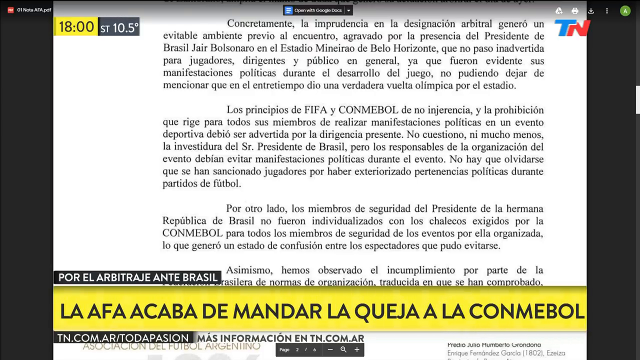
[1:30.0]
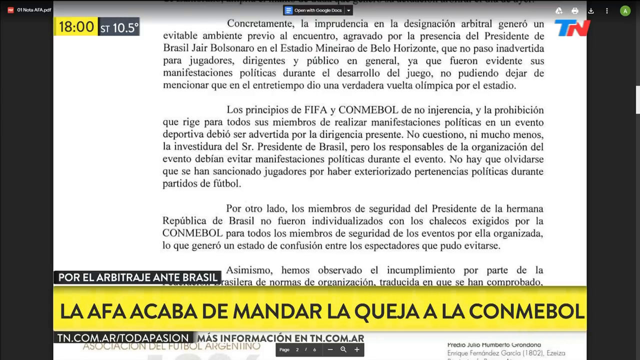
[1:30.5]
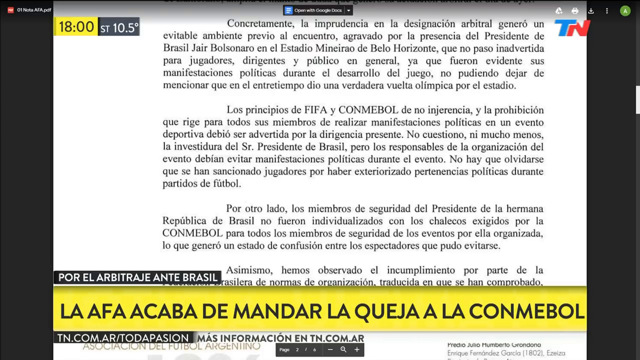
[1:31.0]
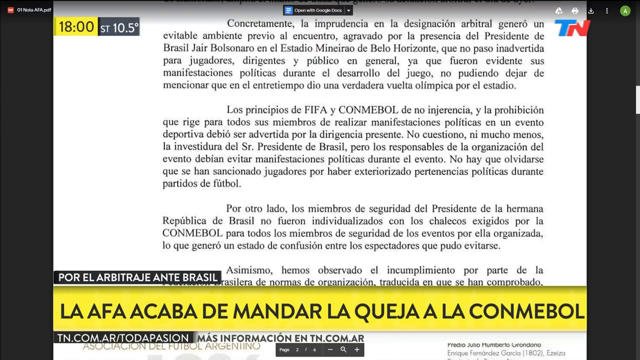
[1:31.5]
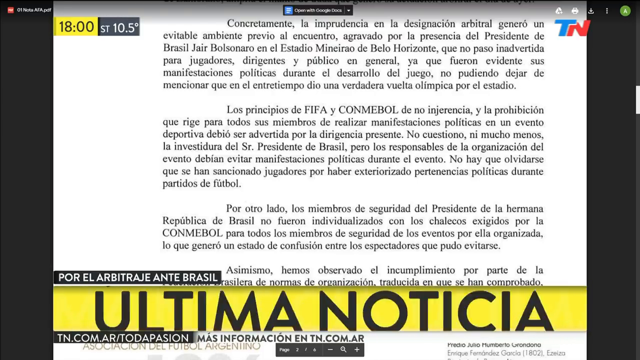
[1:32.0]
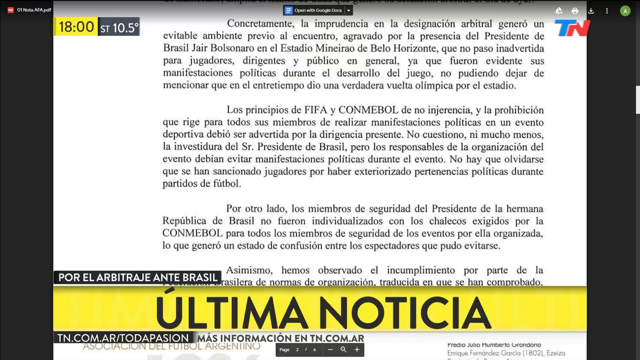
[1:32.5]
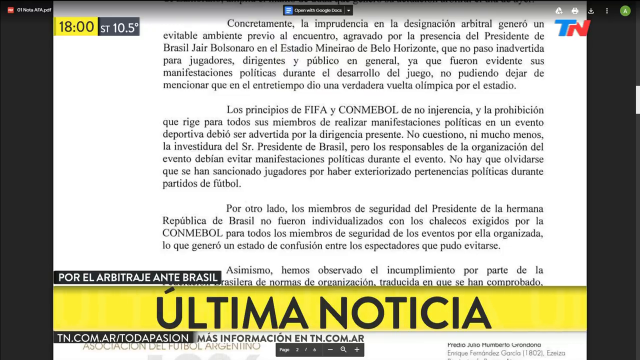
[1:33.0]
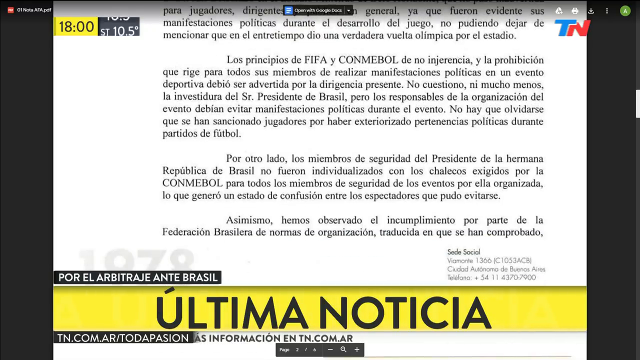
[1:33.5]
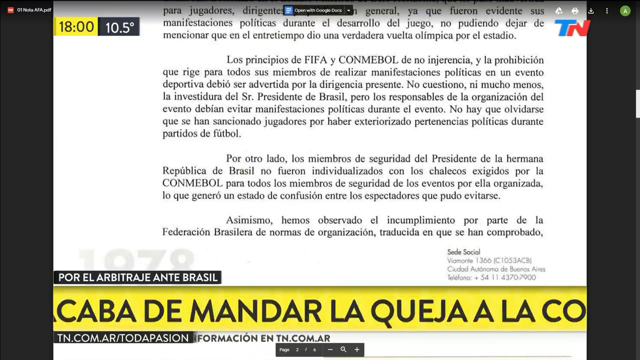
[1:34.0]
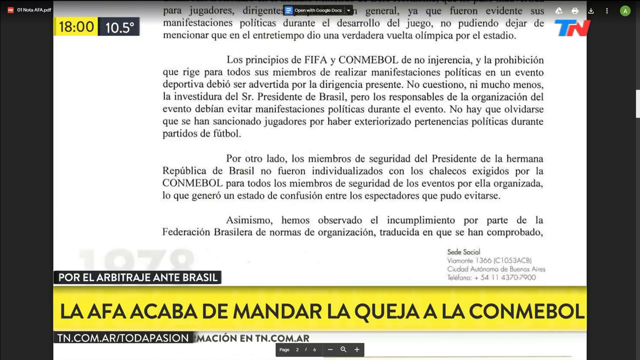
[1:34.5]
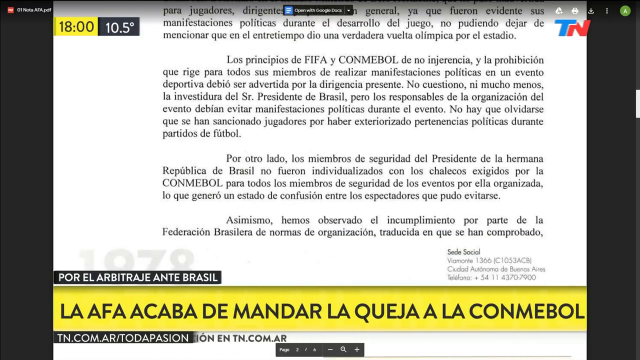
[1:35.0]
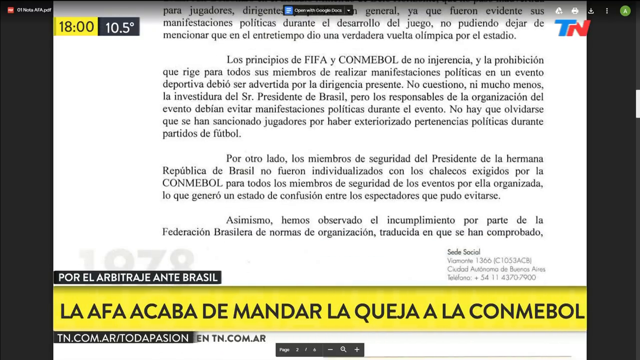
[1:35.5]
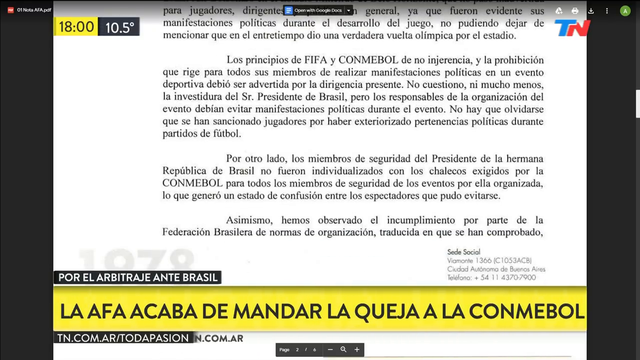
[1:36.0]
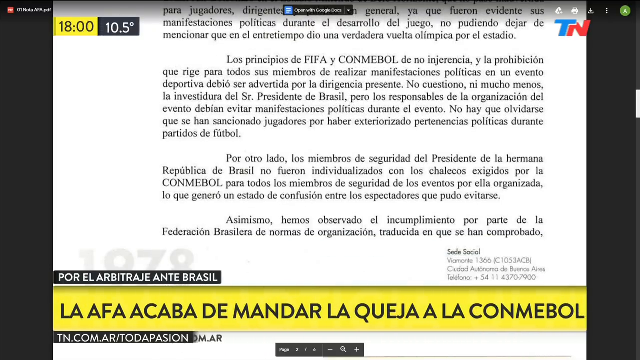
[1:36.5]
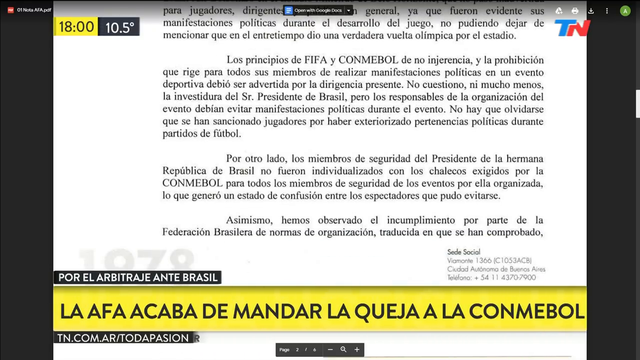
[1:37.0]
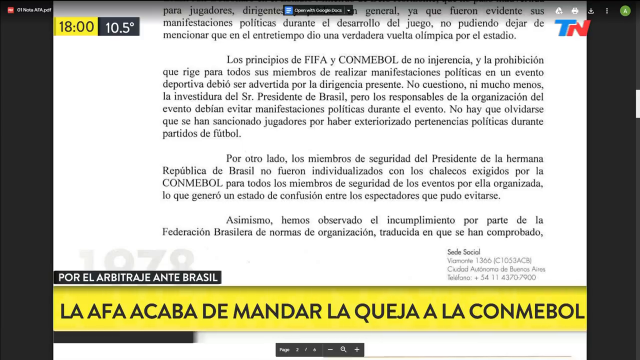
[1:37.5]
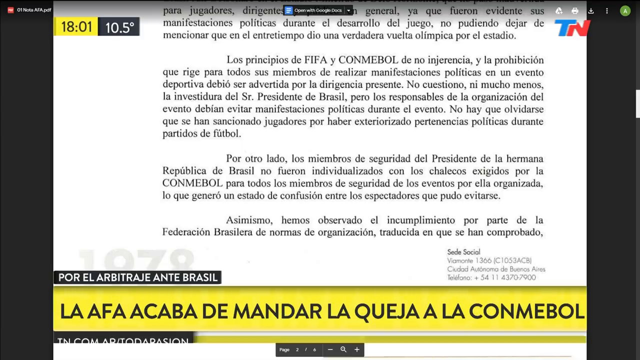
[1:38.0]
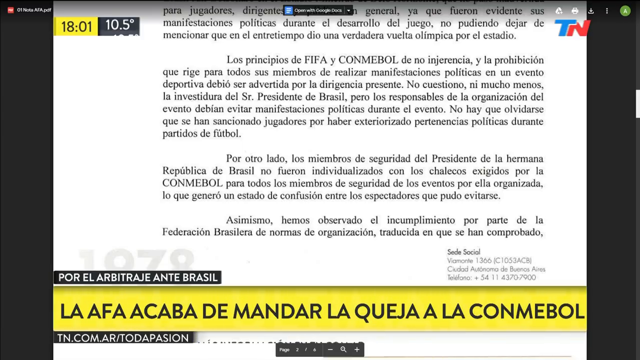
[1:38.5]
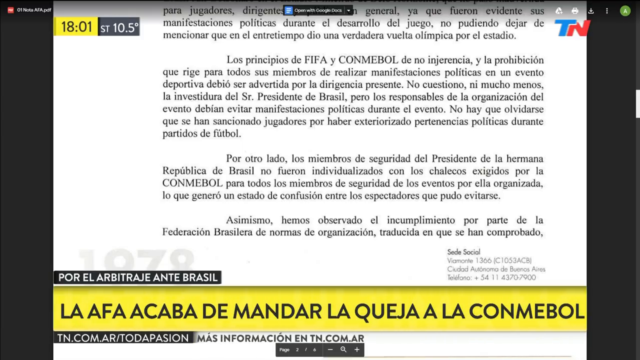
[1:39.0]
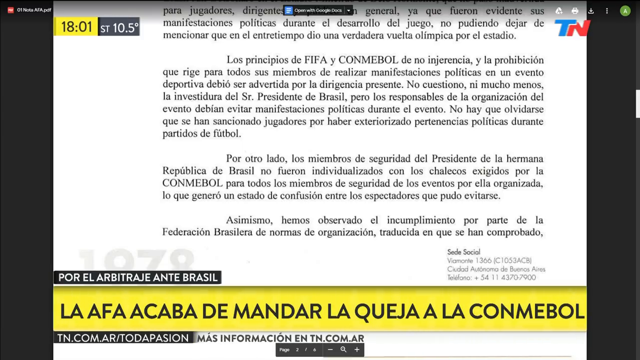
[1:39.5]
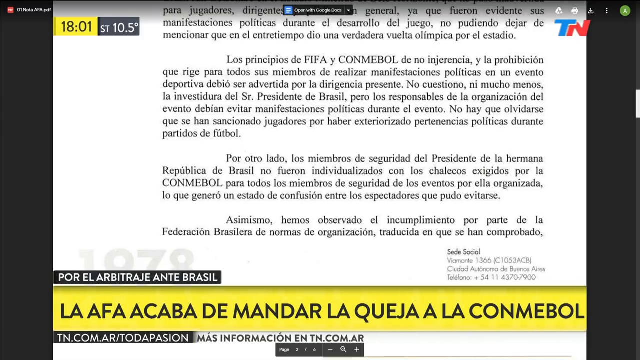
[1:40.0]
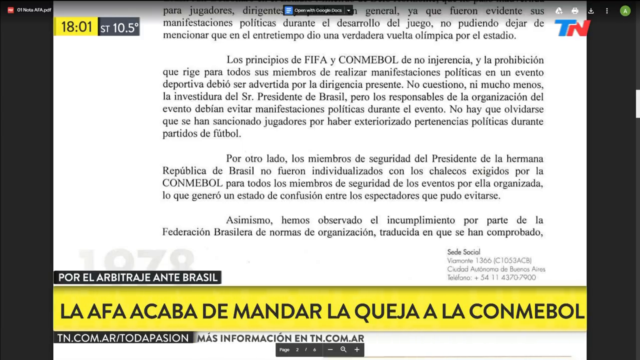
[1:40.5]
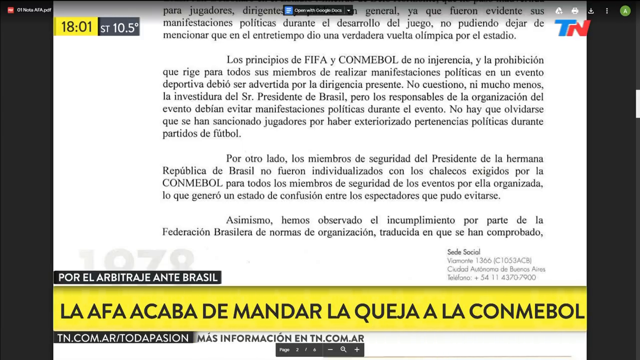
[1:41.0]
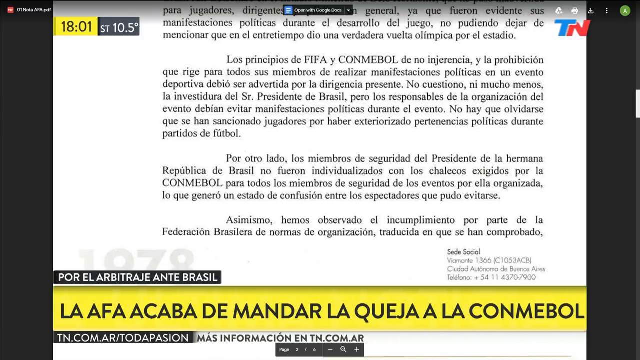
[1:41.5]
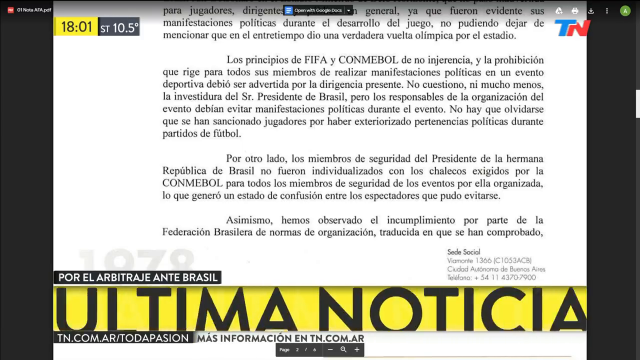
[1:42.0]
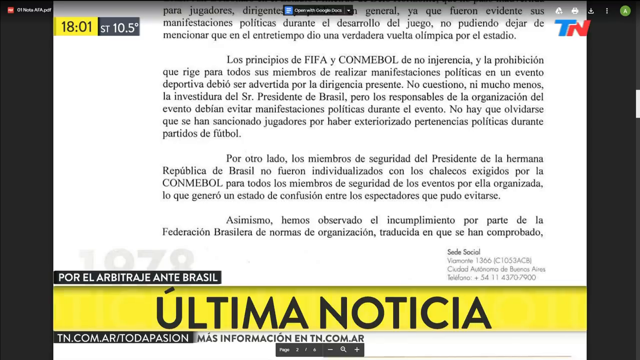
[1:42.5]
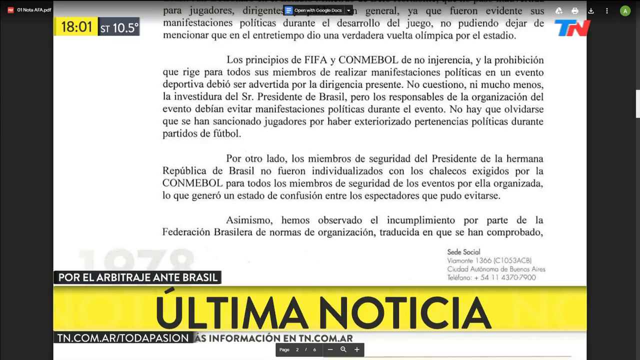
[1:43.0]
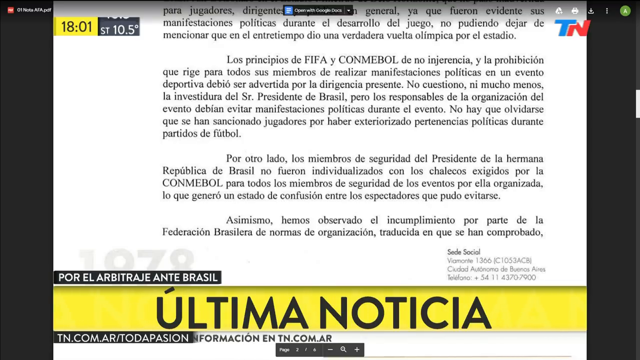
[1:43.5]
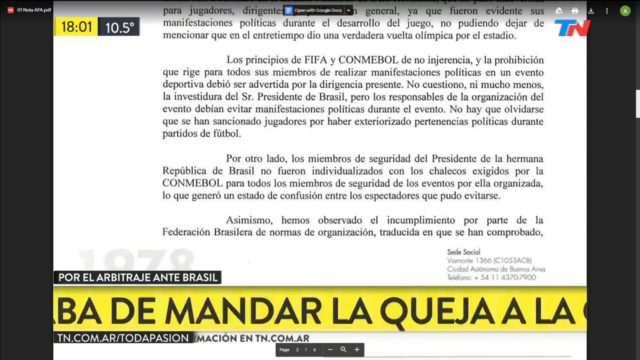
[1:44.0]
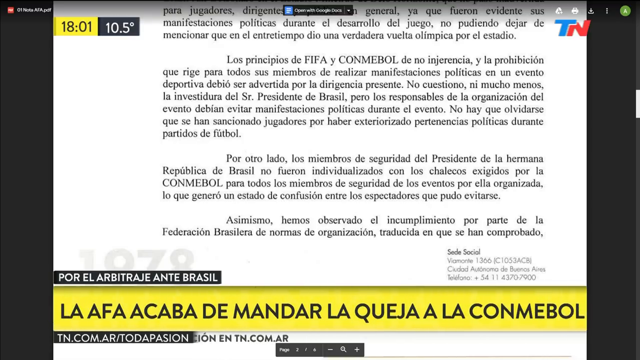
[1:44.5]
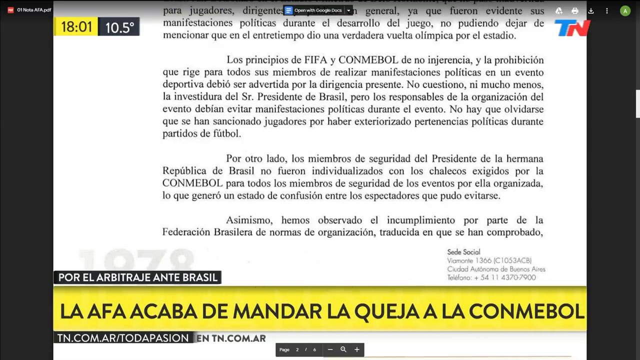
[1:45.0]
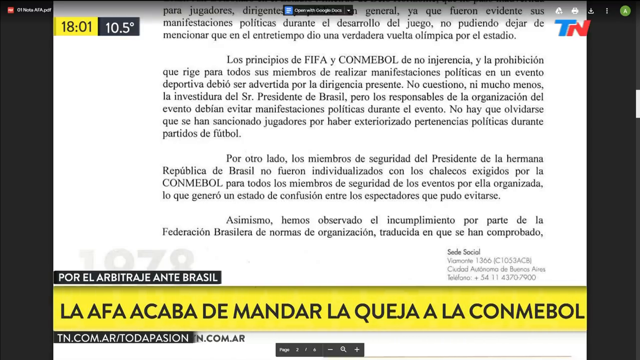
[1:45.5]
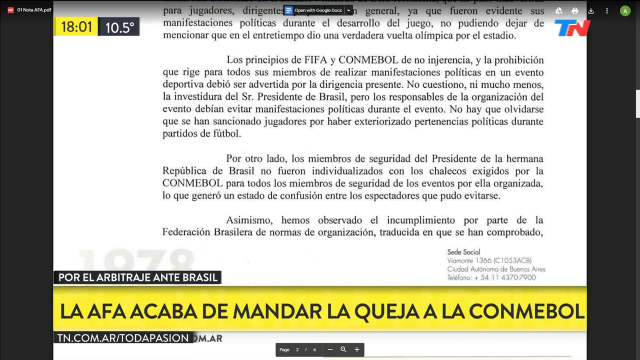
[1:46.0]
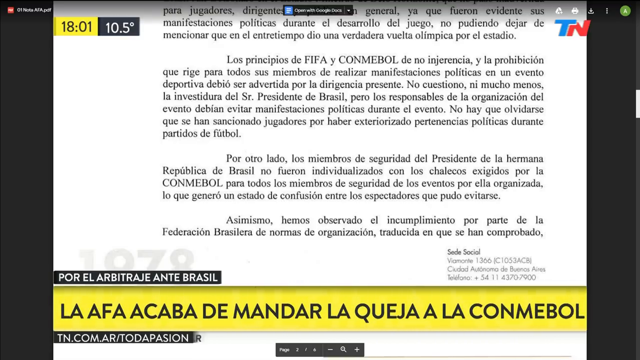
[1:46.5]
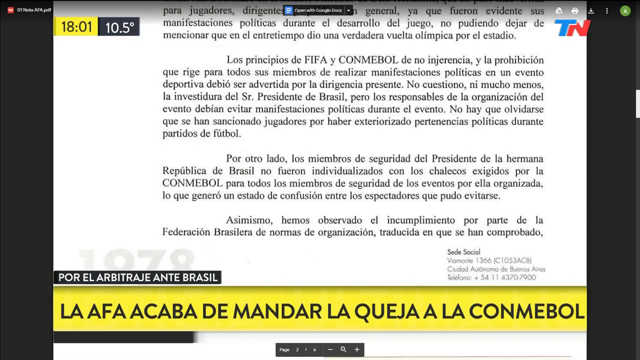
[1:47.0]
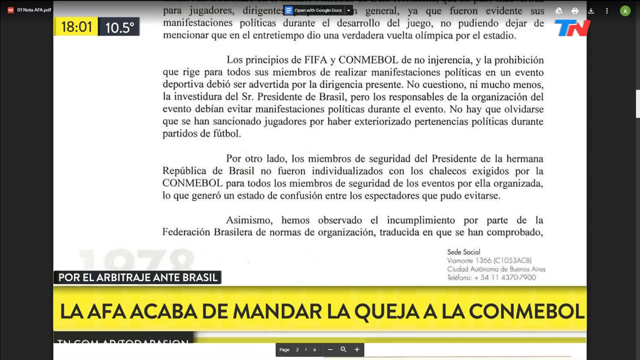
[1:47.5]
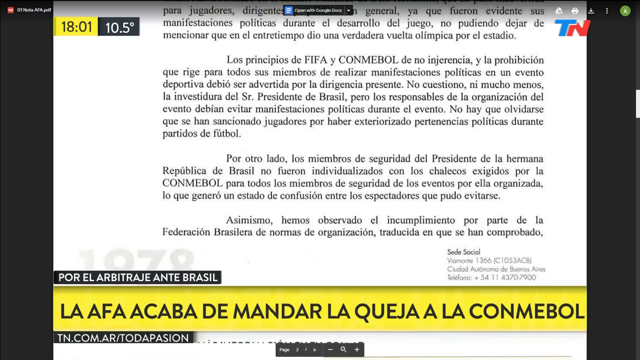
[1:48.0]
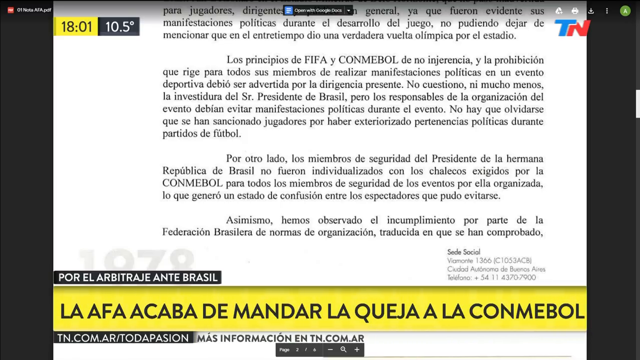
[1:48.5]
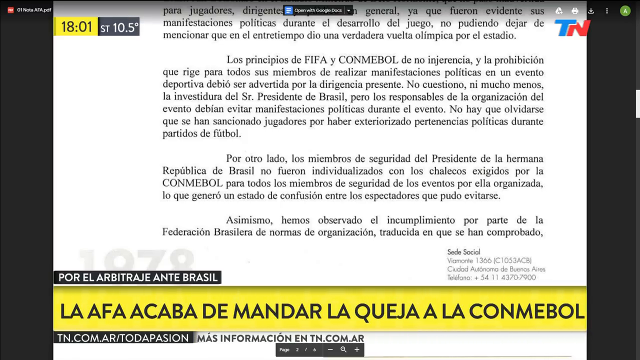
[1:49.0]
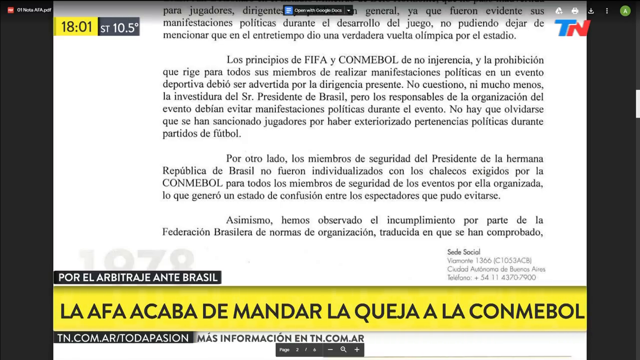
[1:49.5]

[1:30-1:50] The form shows "Ultima Noticia," and the word "FIFA" appears, indicating something involving soccer. The form continues as the user scrolls up and down. A gold bar at the bottom of the screen says something like "AFA, Acaba de Mandar, La Cueja a la Cana."